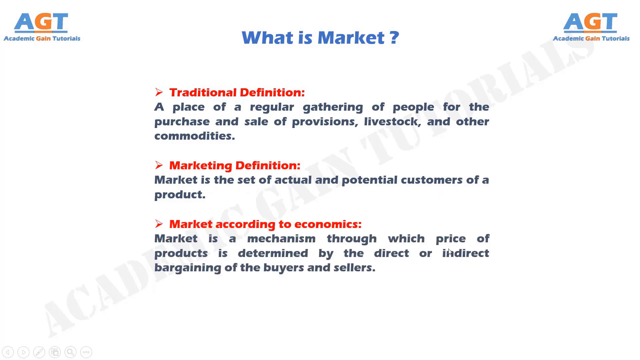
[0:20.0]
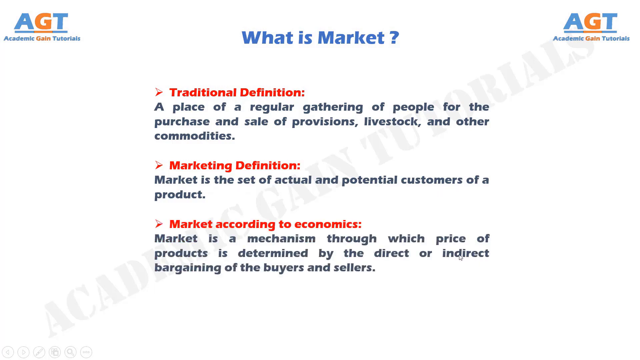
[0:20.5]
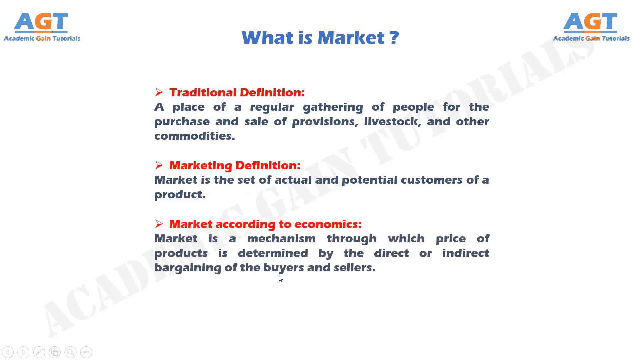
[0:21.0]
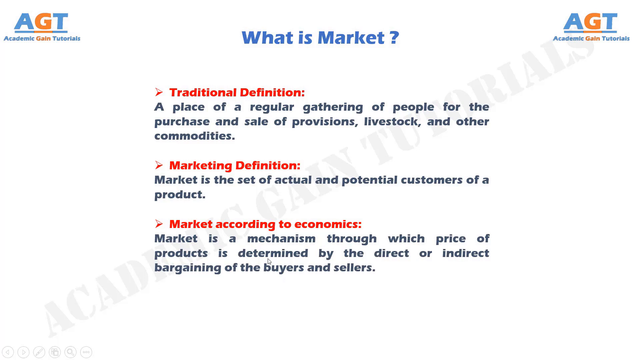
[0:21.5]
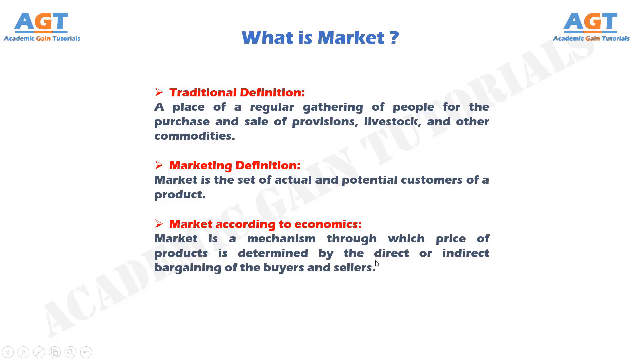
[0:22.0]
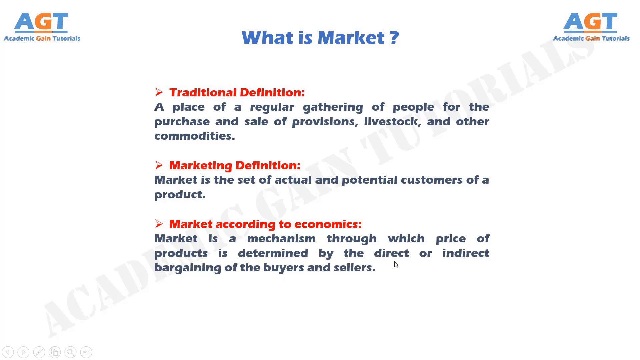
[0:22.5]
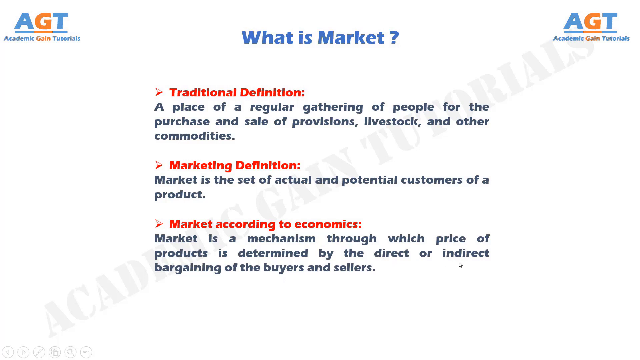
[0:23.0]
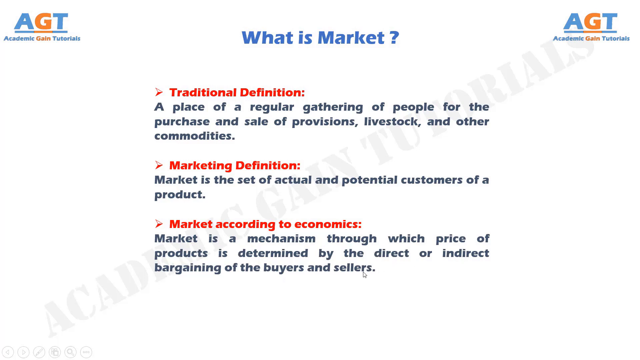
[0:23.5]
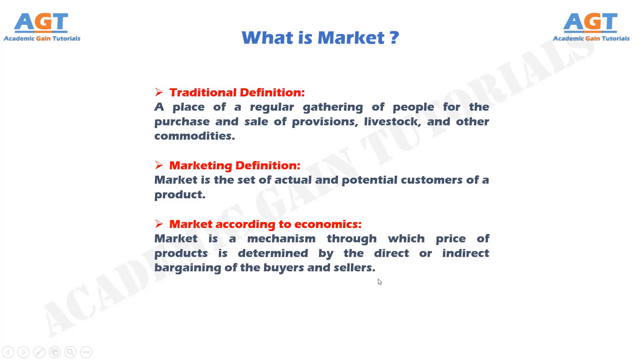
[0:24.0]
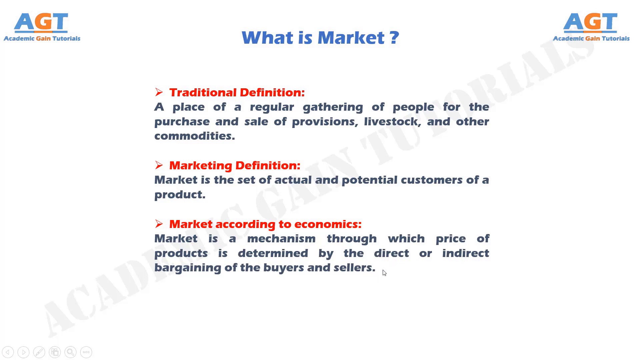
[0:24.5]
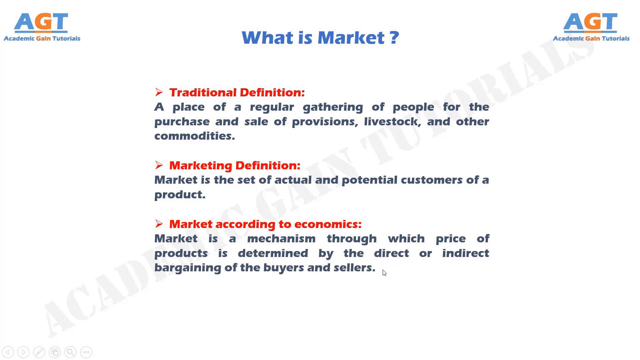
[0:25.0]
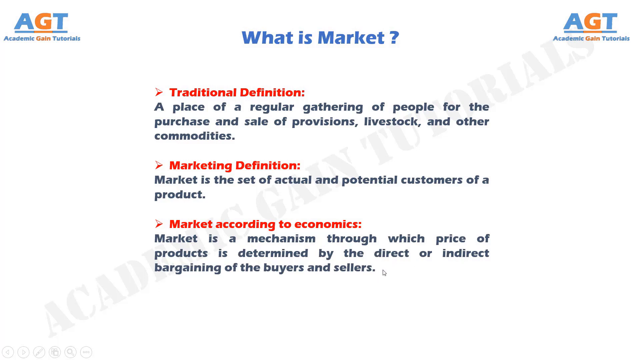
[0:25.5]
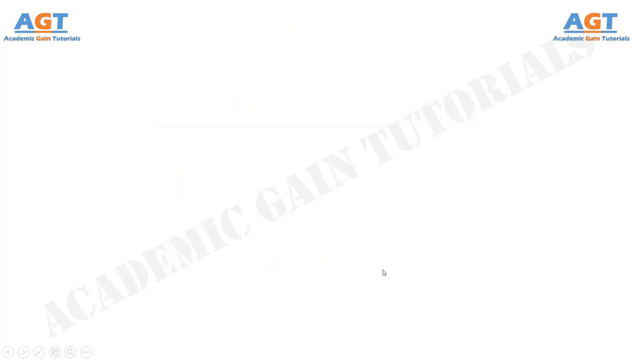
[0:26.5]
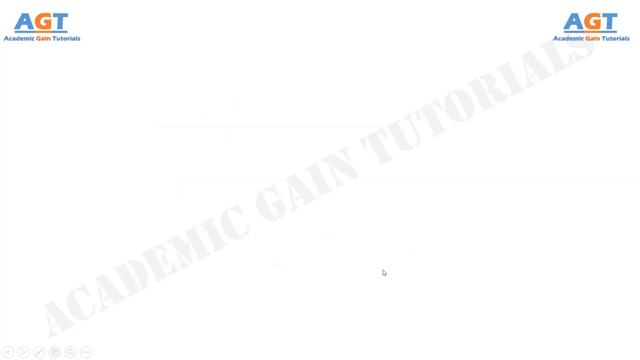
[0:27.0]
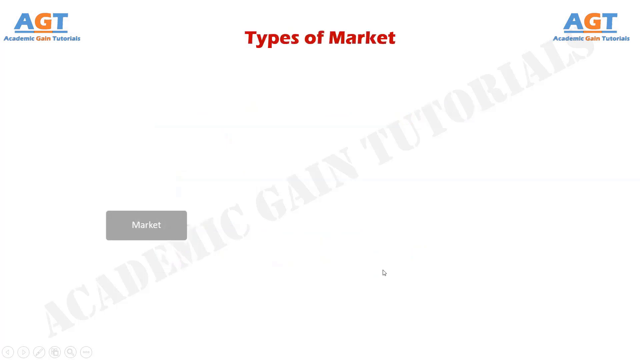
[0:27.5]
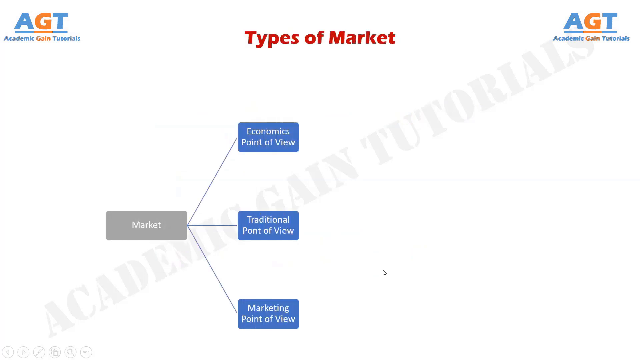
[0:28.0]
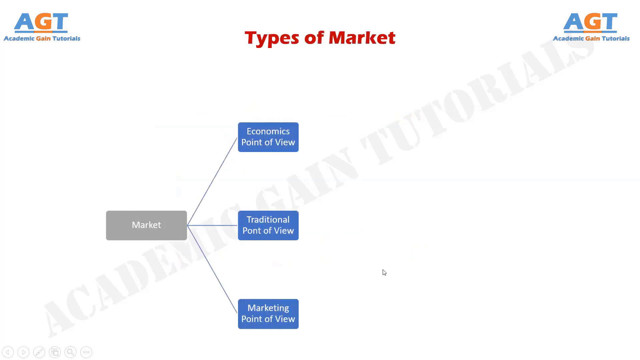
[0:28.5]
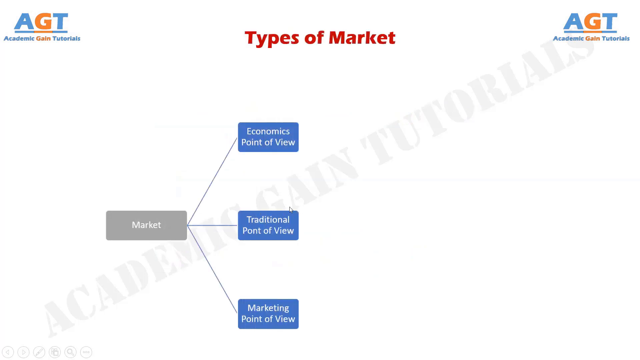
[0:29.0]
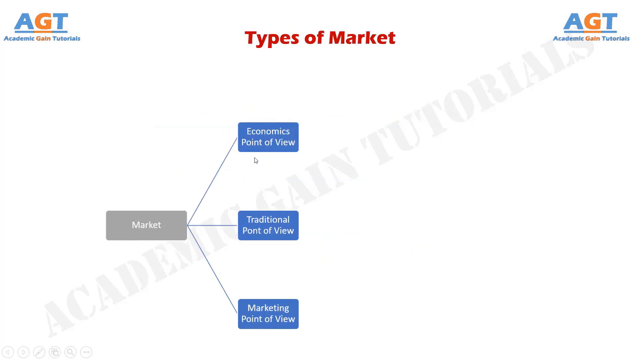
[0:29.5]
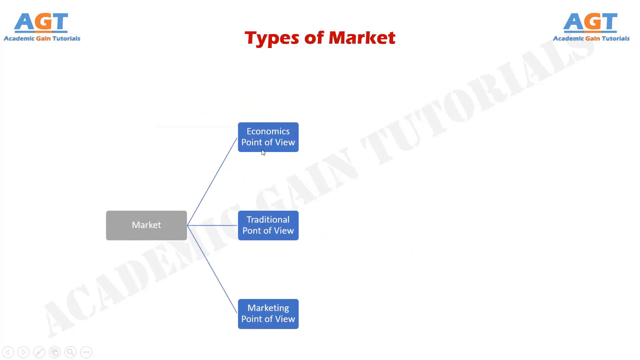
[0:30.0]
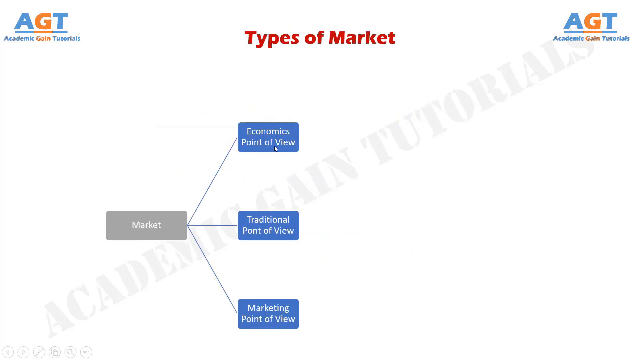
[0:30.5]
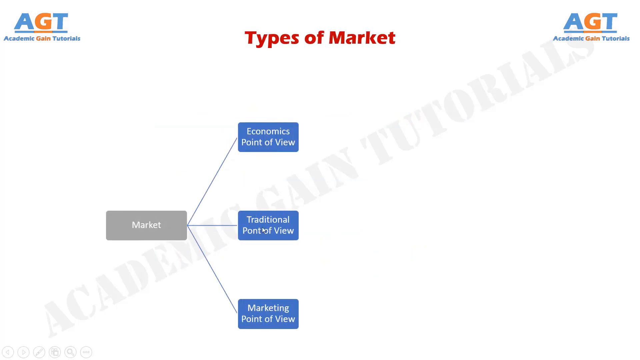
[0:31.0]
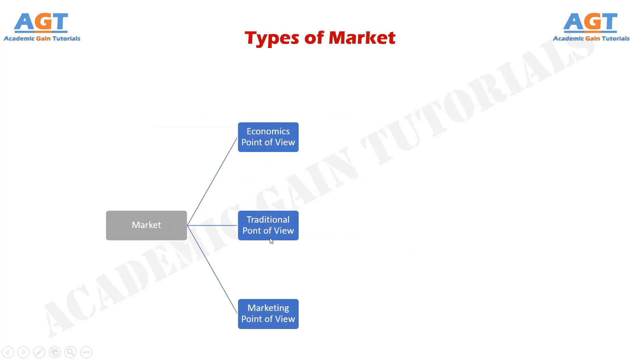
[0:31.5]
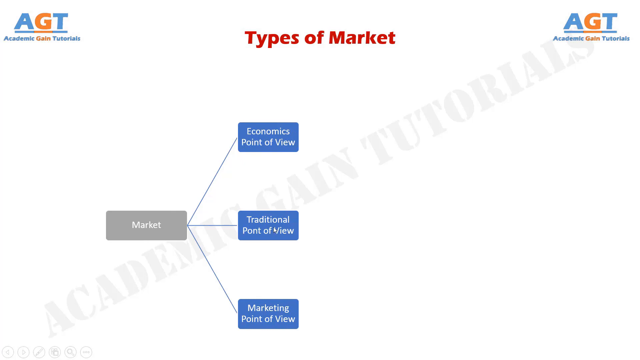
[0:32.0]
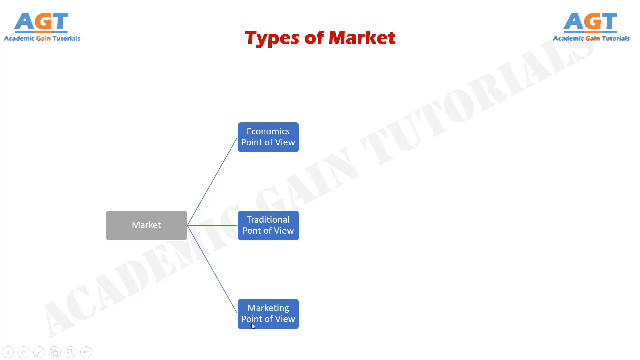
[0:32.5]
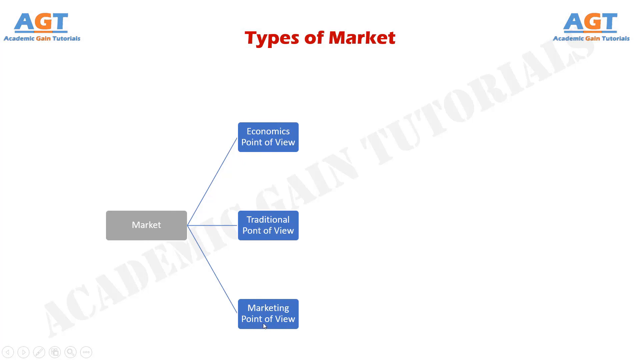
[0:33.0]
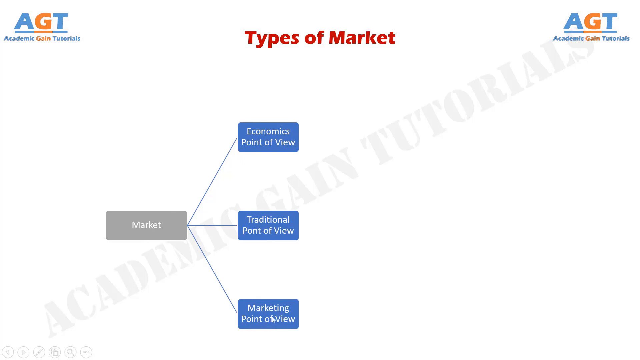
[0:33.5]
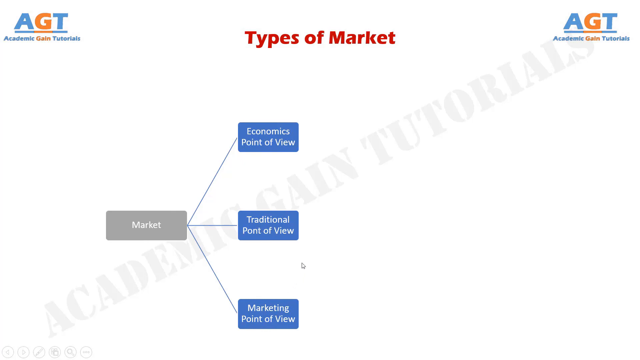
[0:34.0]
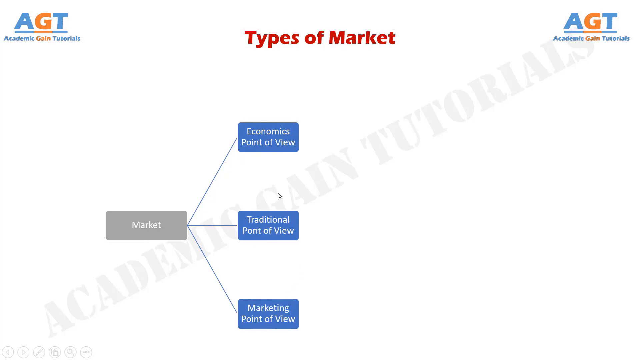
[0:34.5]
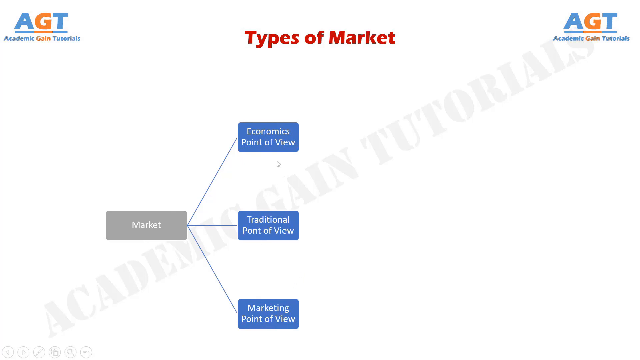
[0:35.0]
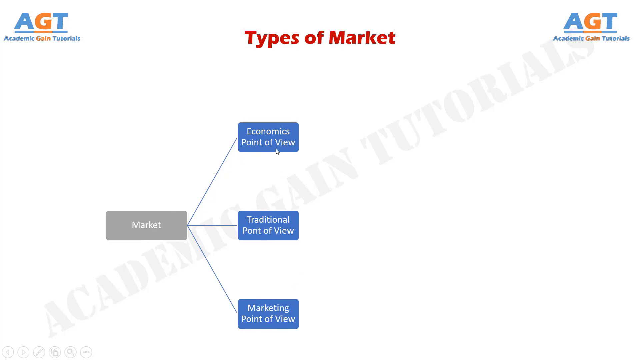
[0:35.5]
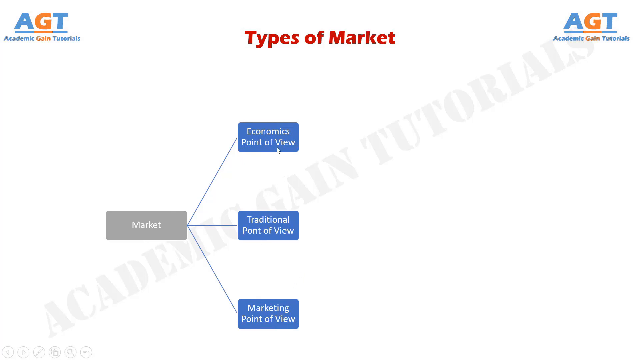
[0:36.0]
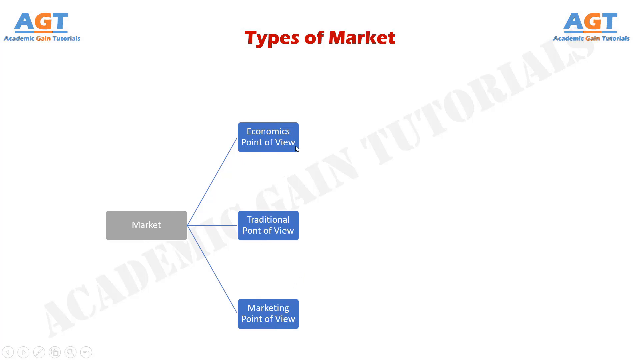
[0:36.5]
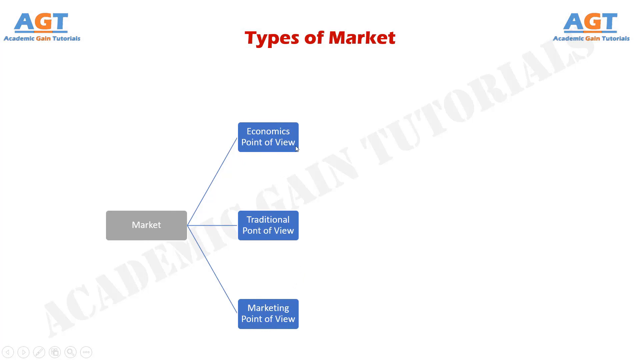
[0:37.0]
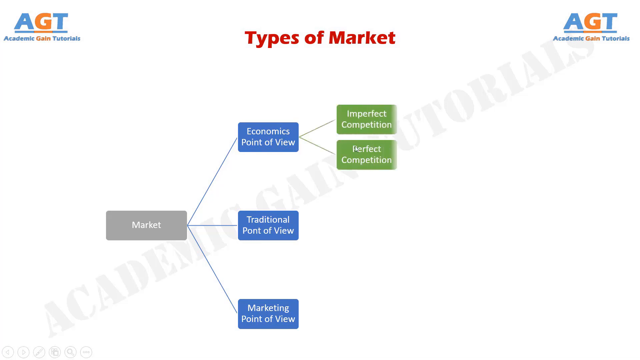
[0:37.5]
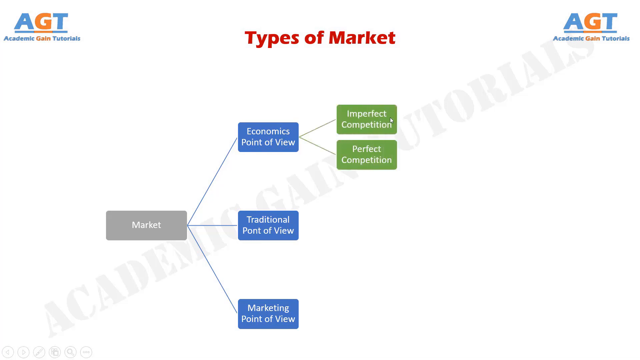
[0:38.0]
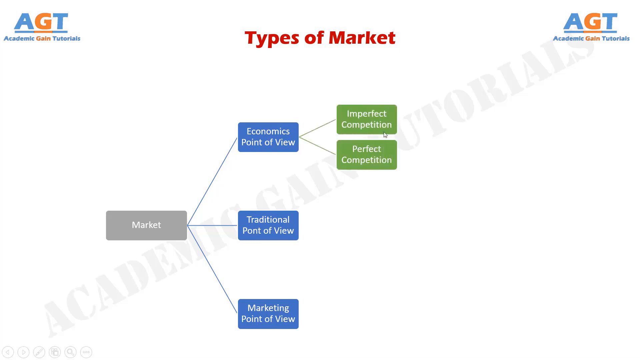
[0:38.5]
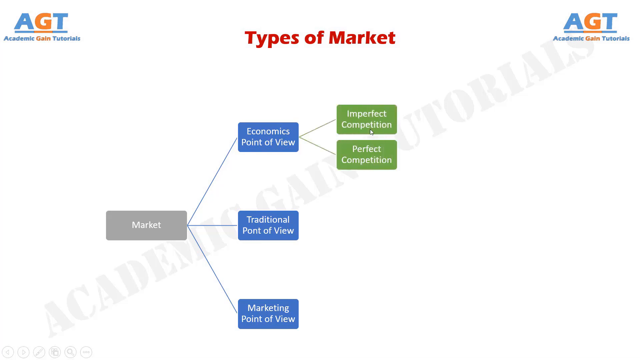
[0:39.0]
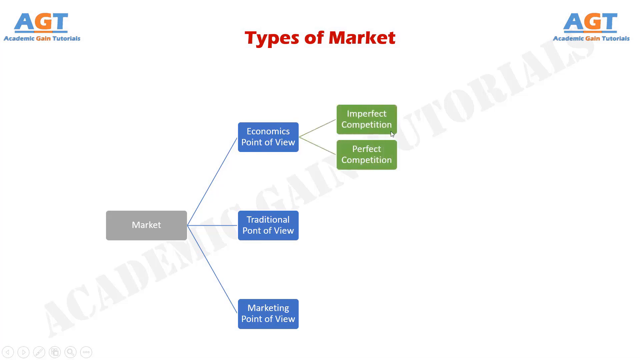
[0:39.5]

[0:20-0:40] A recording of a computer screen shows "what is market?" at the top. Three definitions are on the screen: the traditional definition, identifying it as a gathering of people for the purchase of items; a marketing definition stating it is the set of actual and potential customers; and the economic definition, a mechanism through which price of products is determined. The title changes to "types of market". A gray box labeled market is on the left-hand side, and three lines come out of it, each leading to a blue box. The top blue box states economics point of view, the middle one traditional point of view, and the bottom one marketing point of view. The cursor moves around the three points of view as if highlighting their importance. It returns to the top economics point of view, at which point two lines come out of it connecting two green boxes: the top green box says imperfect competition and the bottom one perfect competition.